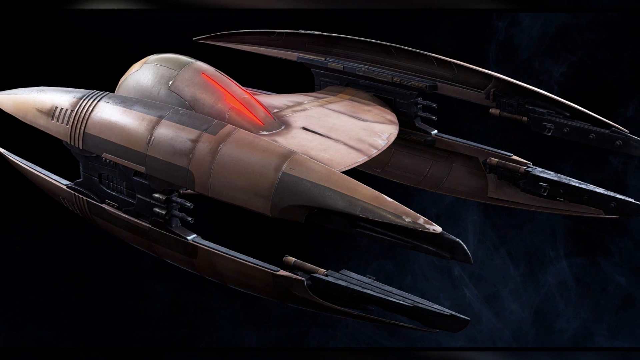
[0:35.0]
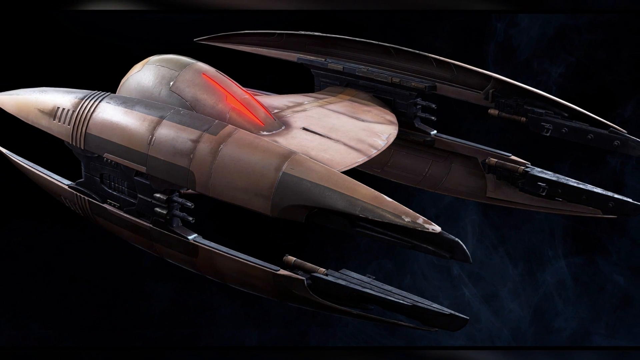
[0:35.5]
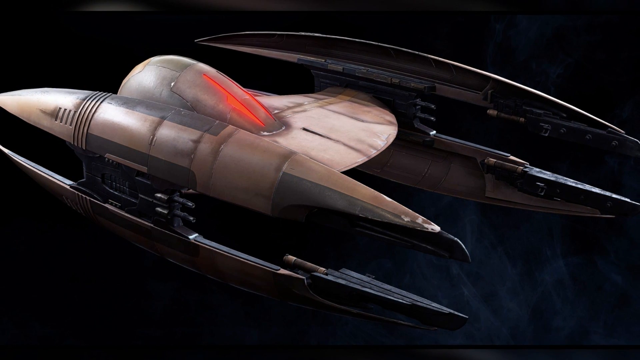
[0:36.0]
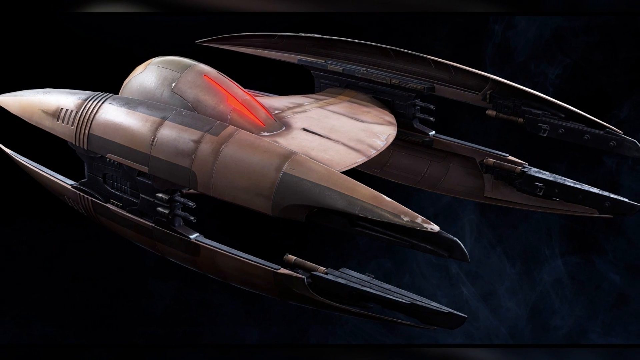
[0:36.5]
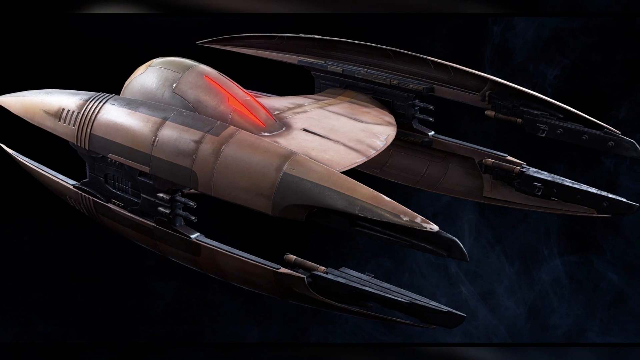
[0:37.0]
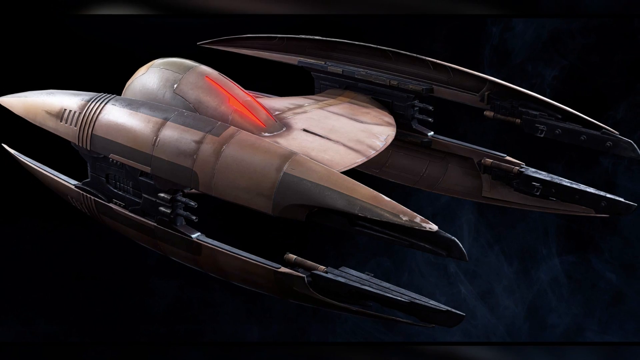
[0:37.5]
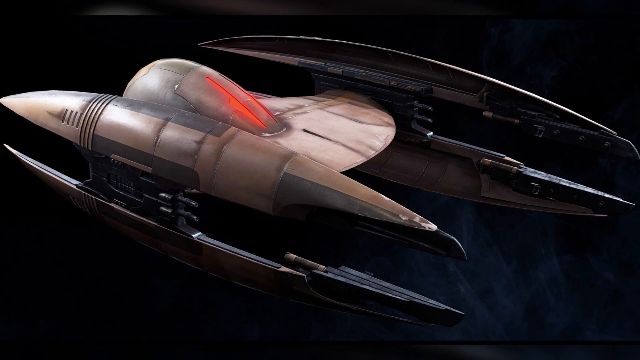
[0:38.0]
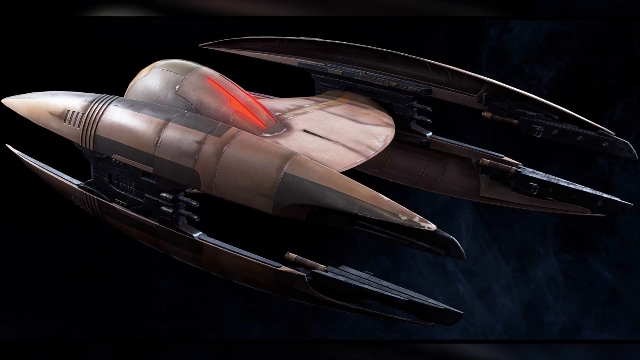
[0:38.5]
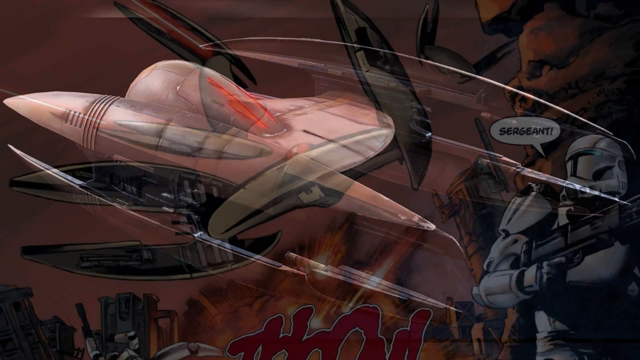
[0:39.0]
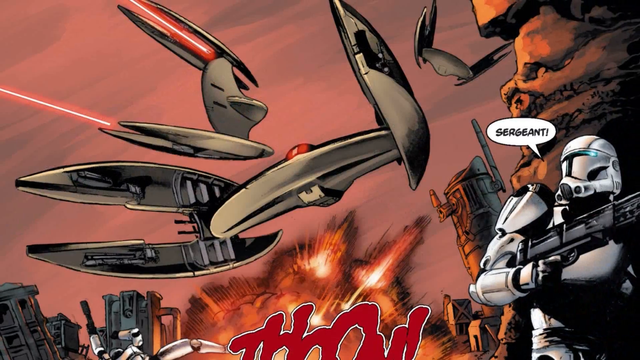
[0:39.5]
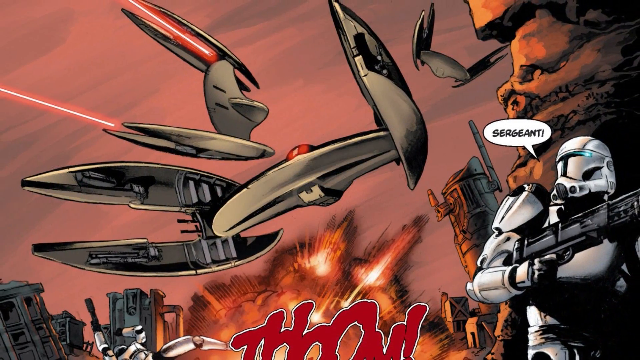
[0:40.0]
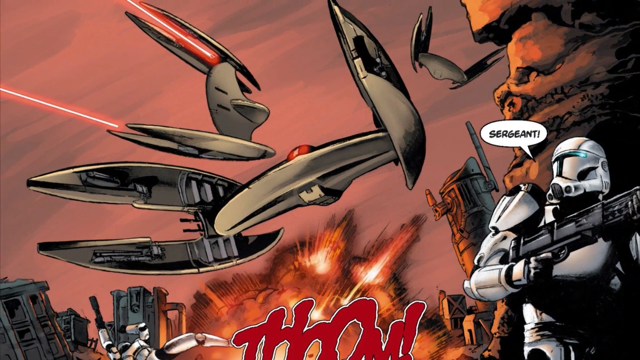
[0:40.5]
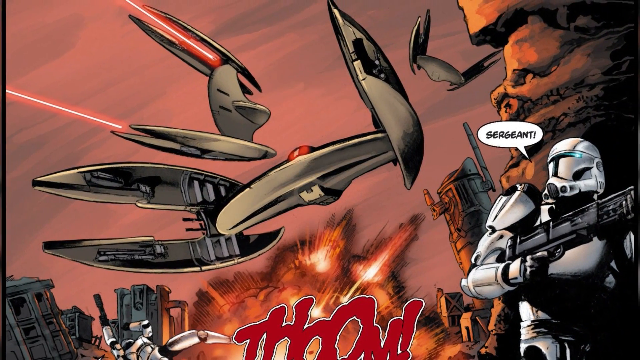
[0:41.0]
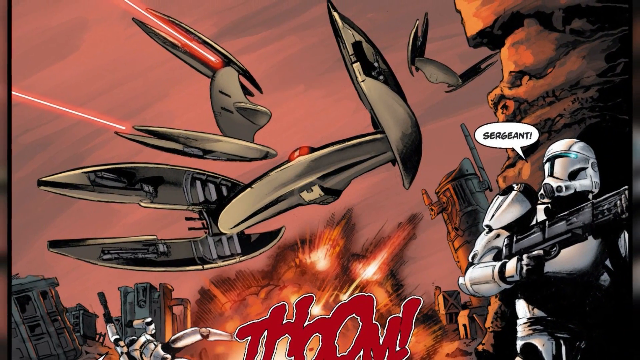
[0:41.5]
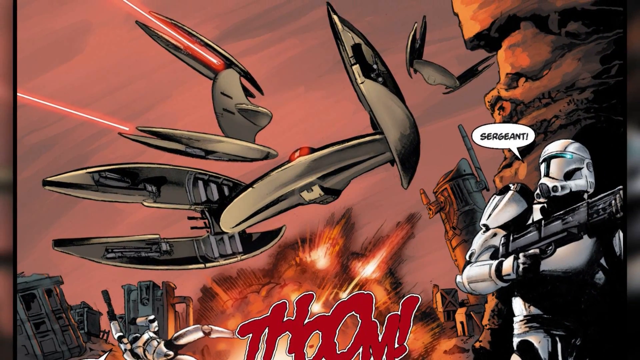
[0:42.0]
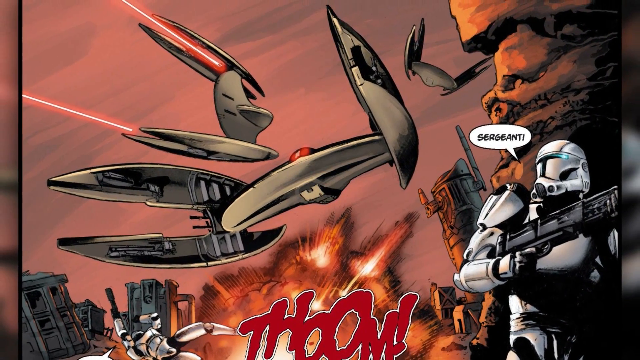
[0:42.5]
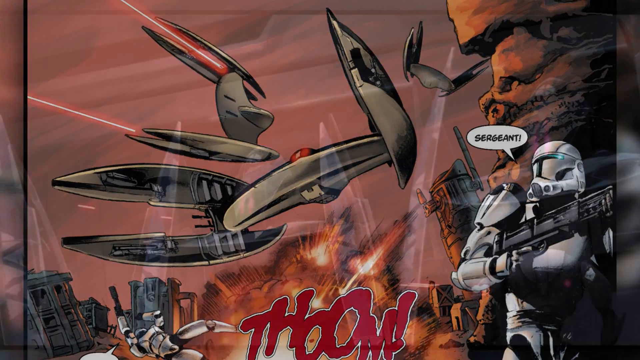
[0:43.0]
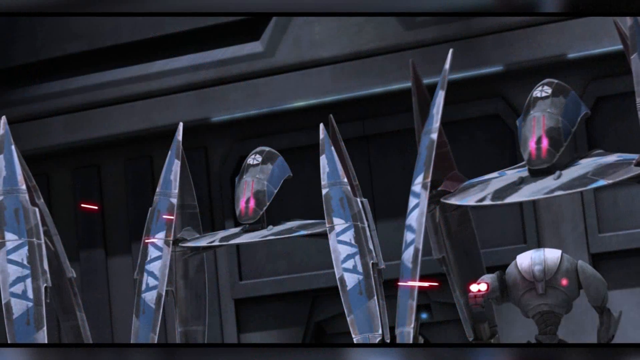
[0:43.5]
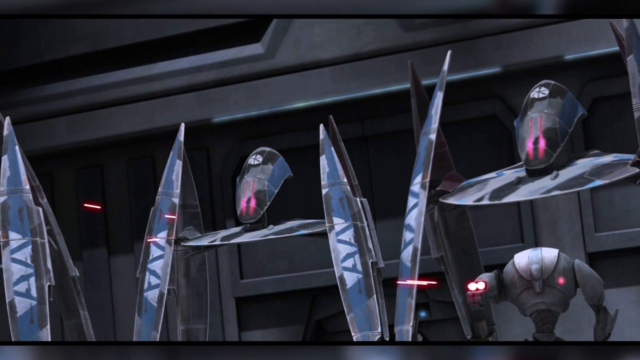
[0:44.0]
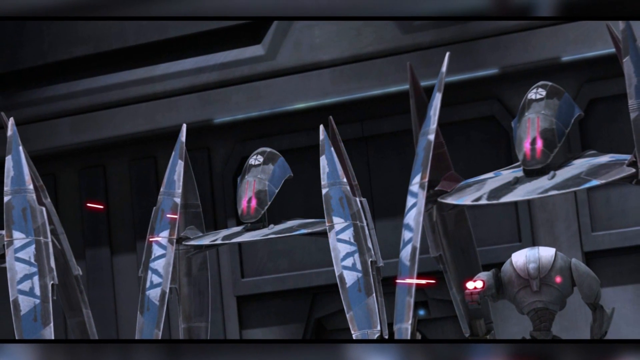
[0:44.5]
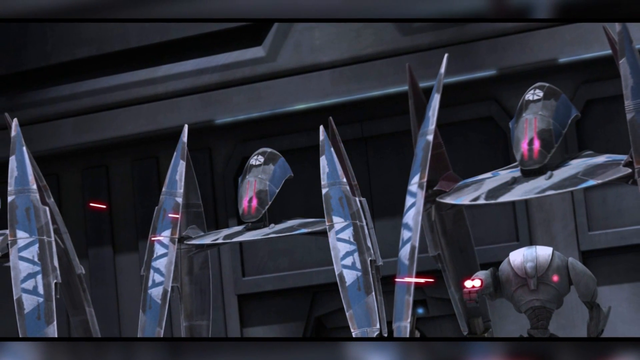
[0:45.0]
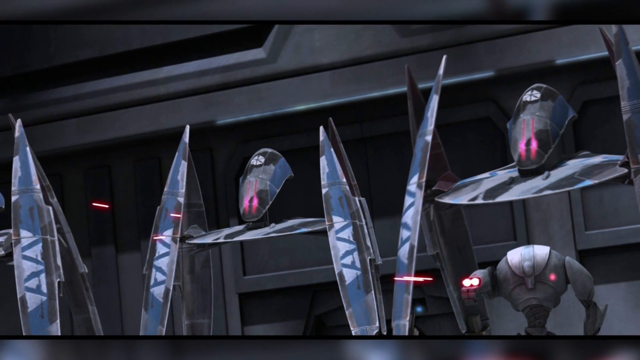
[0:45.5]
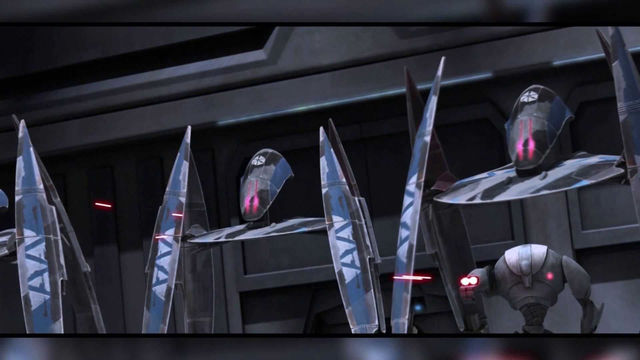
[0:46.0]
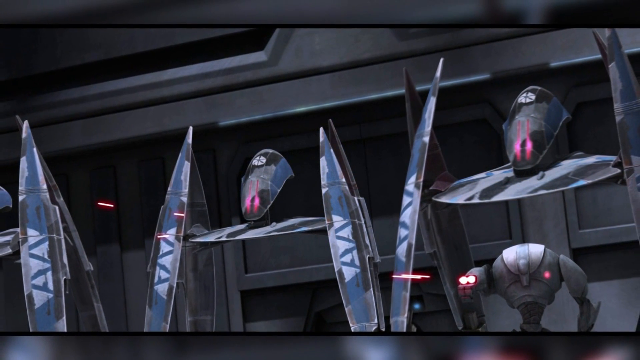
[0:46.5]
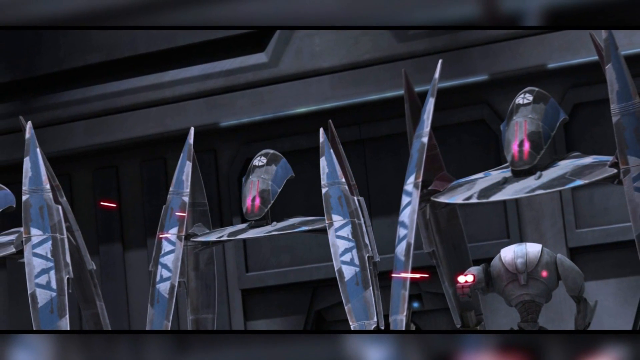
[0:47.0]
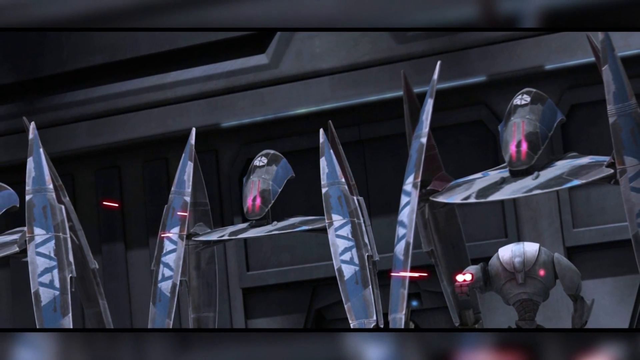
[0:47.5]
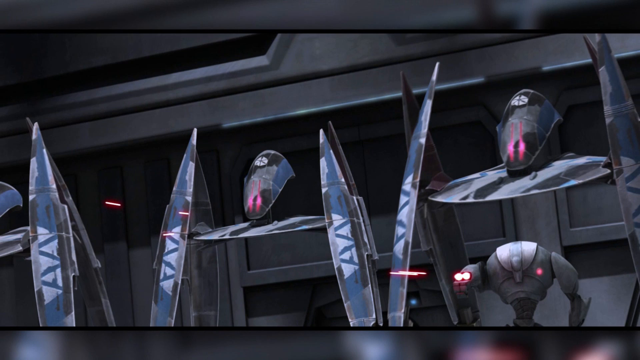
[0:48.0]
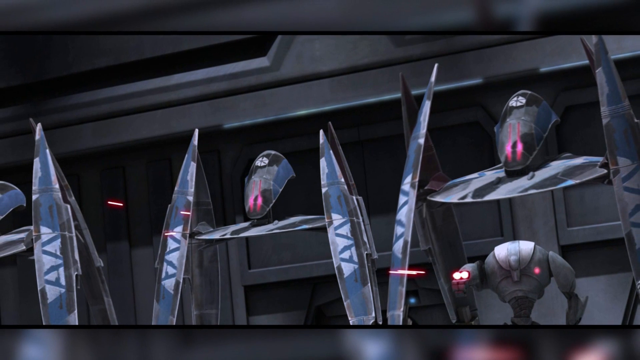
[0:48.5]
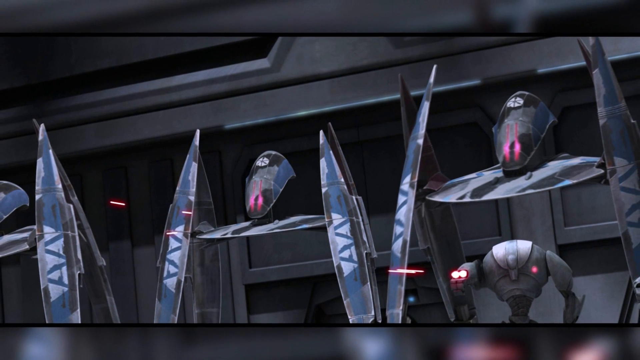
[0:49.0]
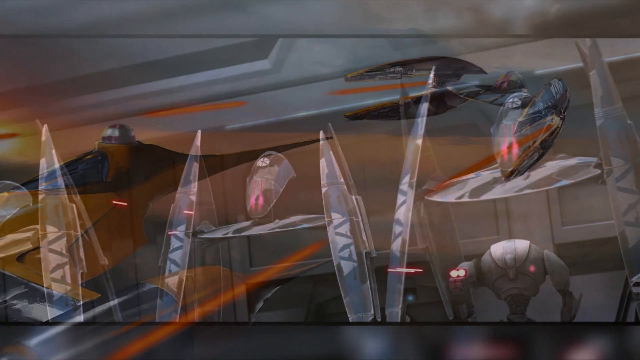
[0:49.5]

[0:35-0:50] The spaceship is shown, and then what appears to be a comic book moves by fairly fast. The comic reads "sergeant" on the right, next to a figure wearing white and holding some kind of gun. There is an explosion behind them, and some kind of rockets or spaceships with lasers are in the sky. A word at the bottom is hard to make out but could be "boom!" Next, multiple figures stand in a row in an indoor room of sorts with moody light. The shot ends quickly on a spaceship that seems to be separated from its base.